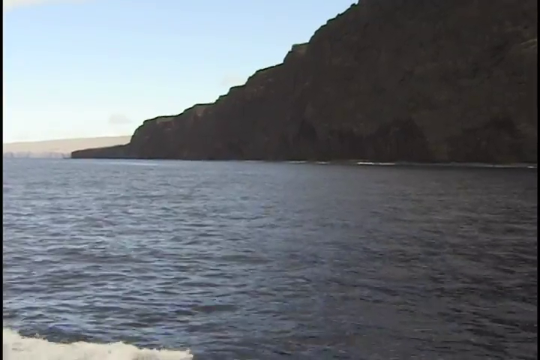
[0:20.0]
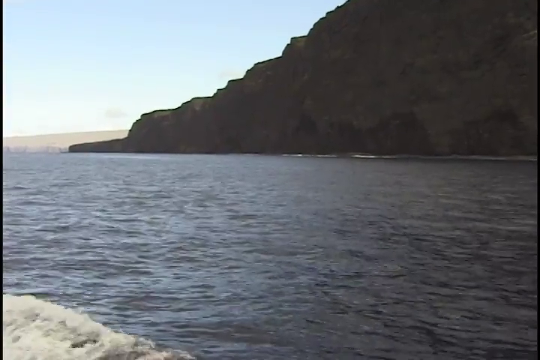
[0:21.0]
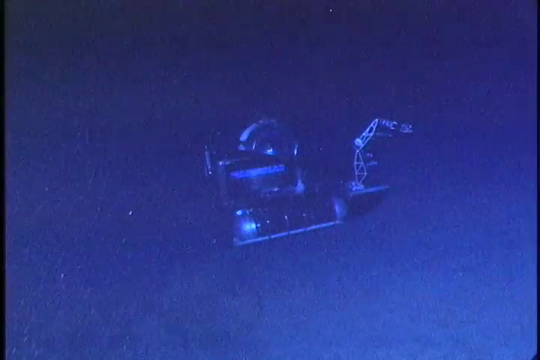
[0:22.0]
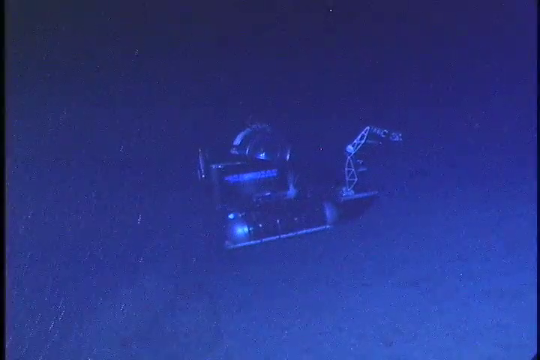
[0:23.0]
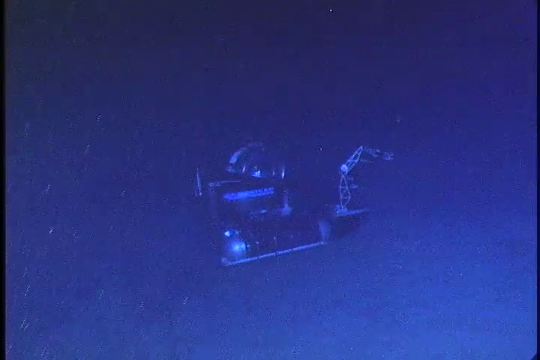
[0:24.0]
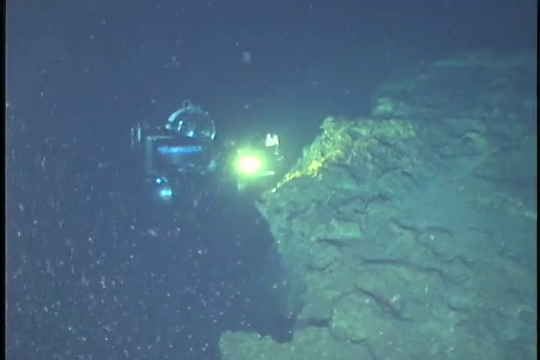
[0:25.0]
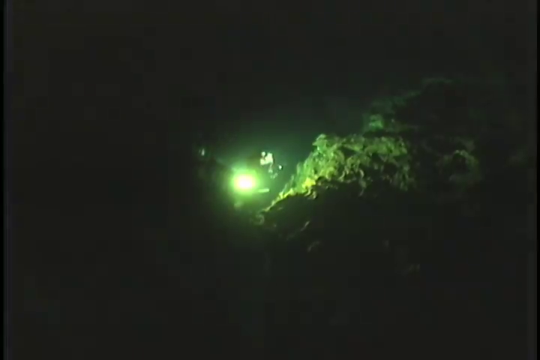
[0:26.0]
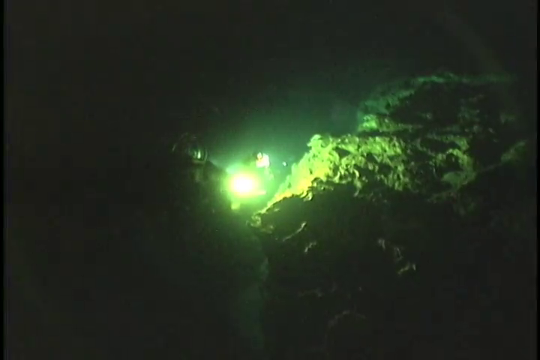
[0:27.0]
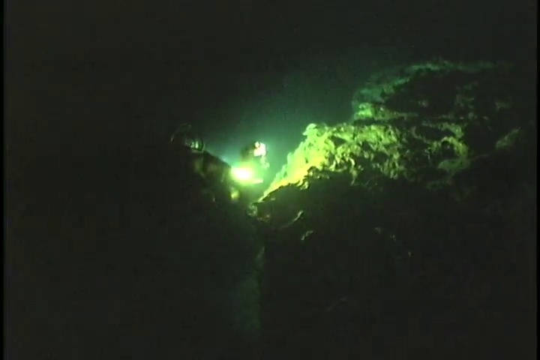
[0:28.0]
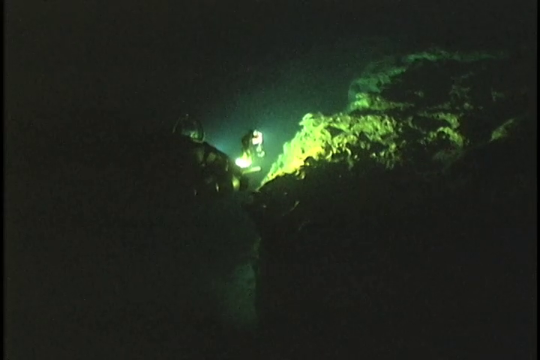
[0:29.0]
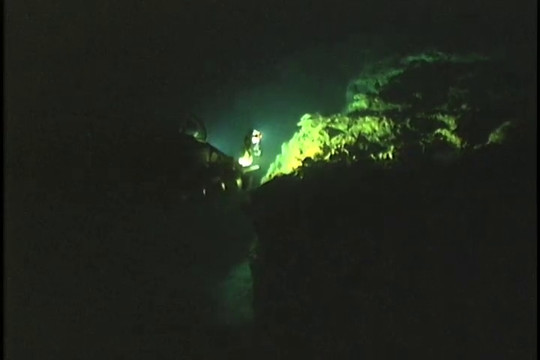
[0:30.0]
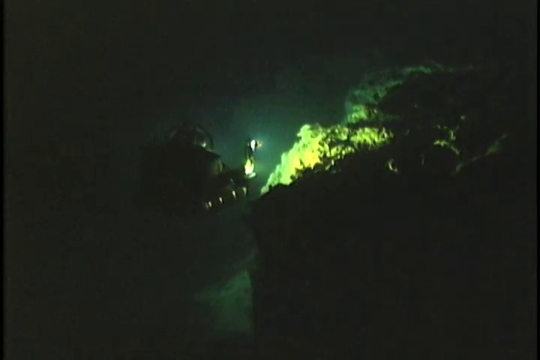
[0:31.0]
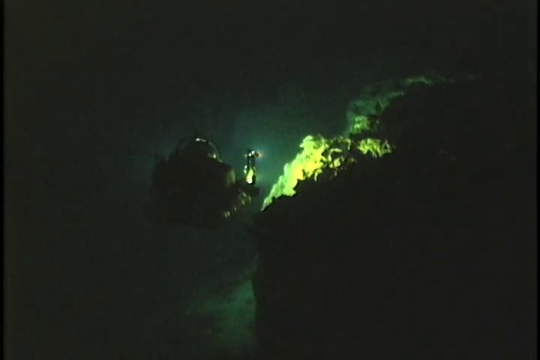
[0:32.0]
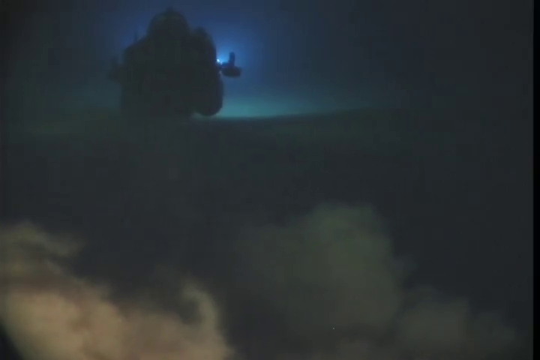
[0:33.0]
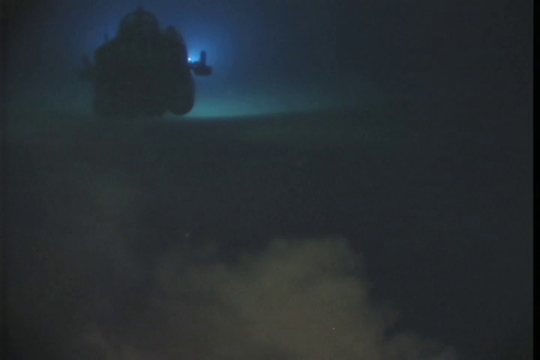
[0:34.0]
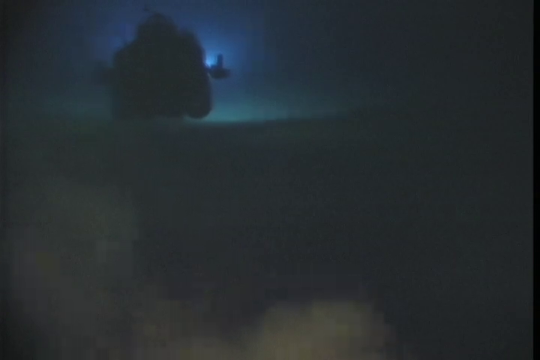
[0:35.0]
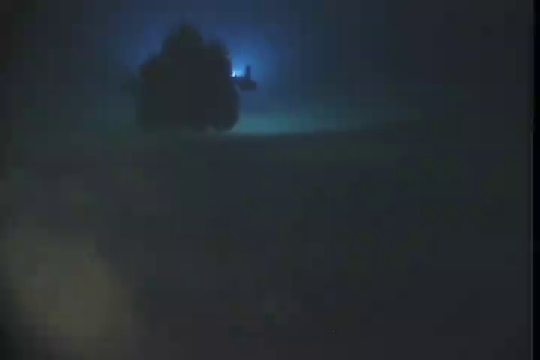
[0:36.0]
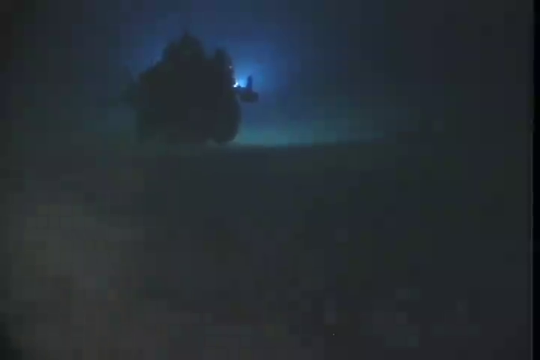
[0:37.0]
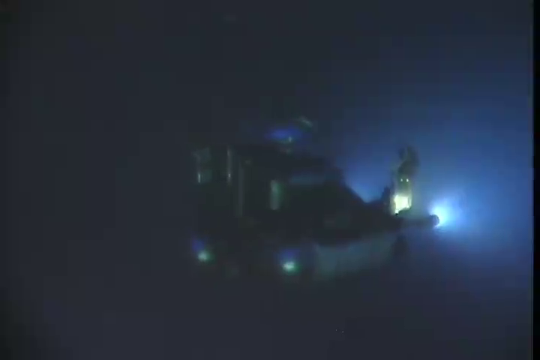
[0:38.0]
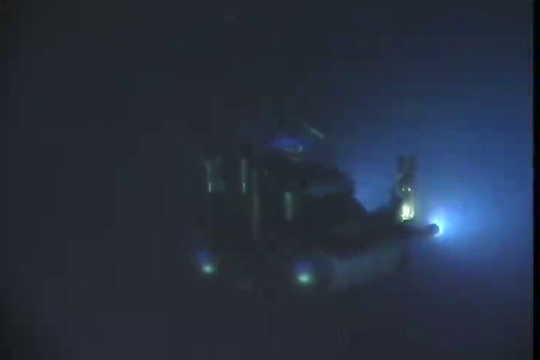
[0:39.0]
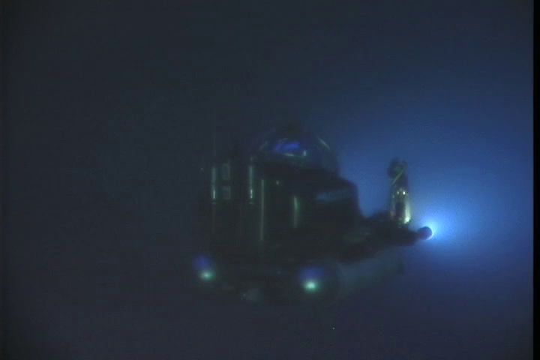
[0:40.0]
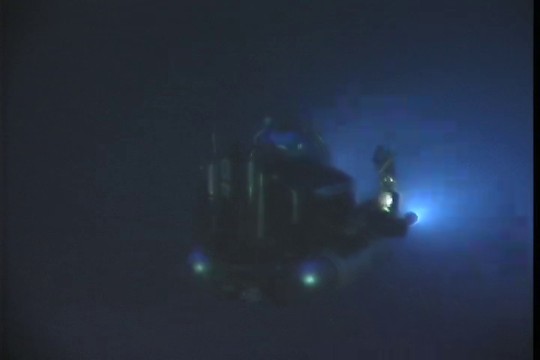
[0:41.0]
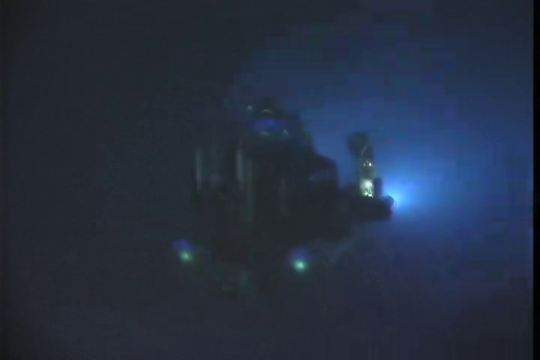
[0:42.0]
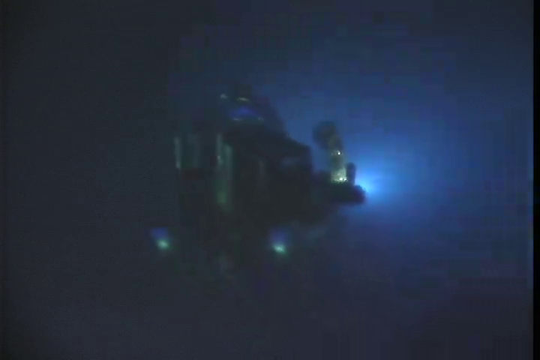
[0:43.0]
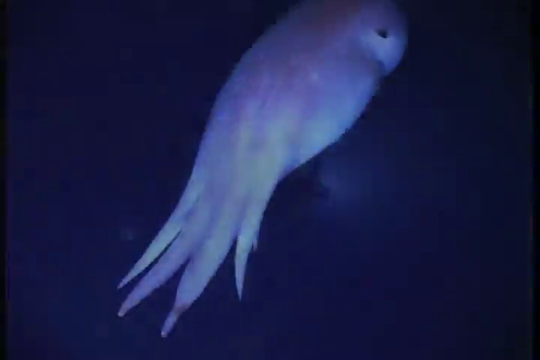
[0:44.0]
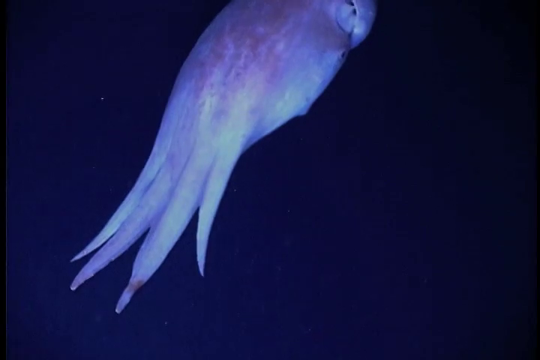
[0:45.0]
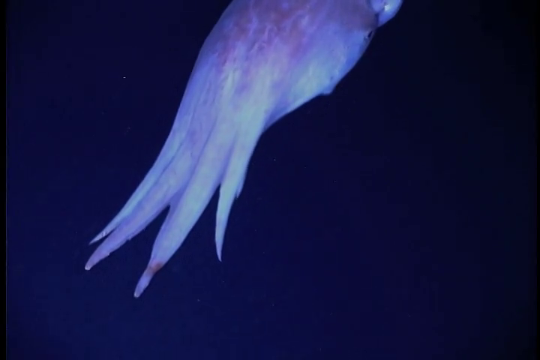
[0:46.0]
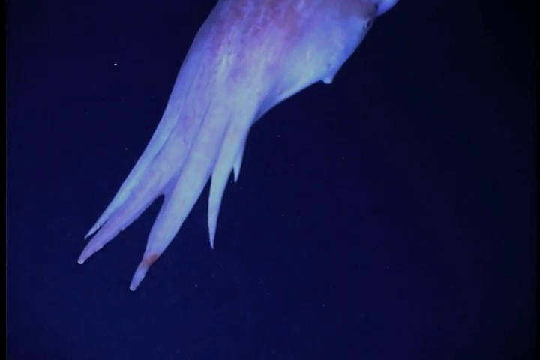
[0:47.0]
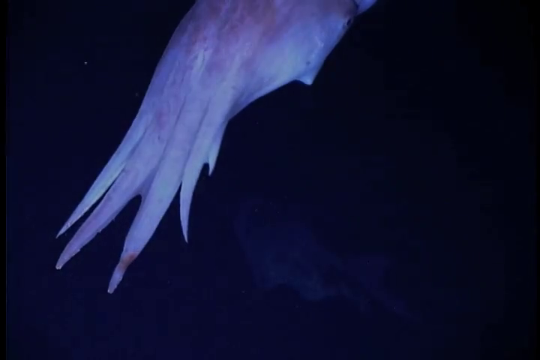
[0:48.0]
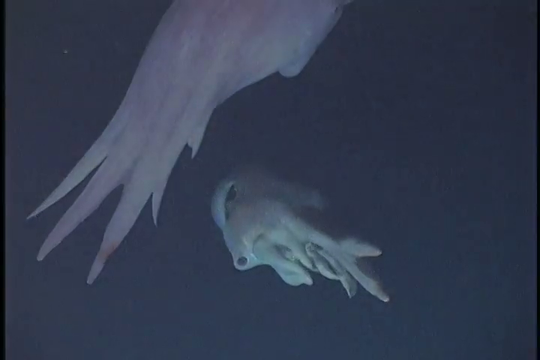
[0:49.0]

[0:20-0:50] The view returns to the surface, where the small mountain or terrain, an island nearby, is in the background for a few seconds before it goes back to the submarine under the sea. The submarine now seems to be at a very low depth, judging by the lack of organisms and the darker color of the surroundings. It continues to descend and is in front of a completely dark rock structure, lit only by the lamp on its arm and other small lights installed on the vehicle. It continues to explore and then seems to find a very strange fish that looks like an octopus but is extremely strange: it has six tentacles and no neck, and unlike a typical octopus with a base, it is completely oval.